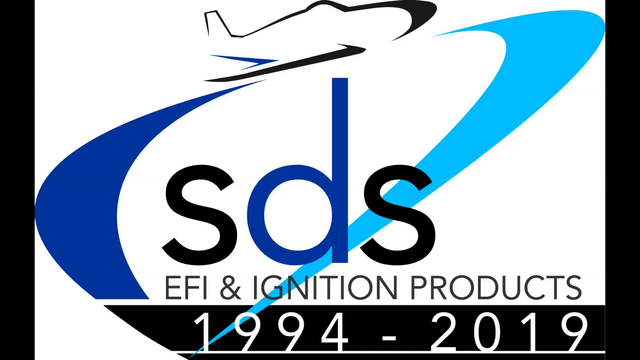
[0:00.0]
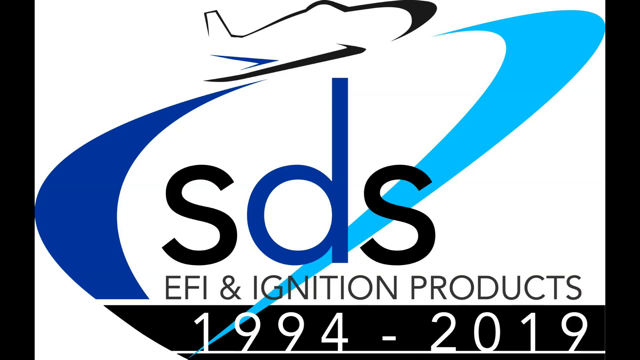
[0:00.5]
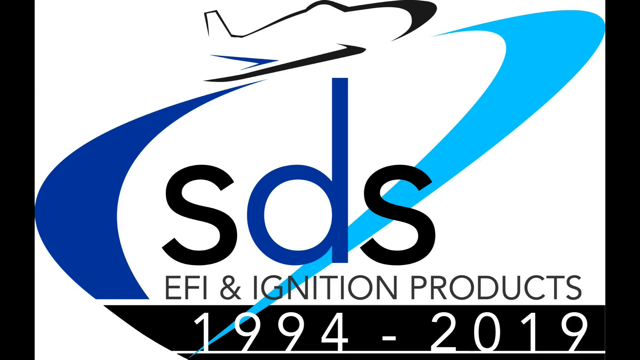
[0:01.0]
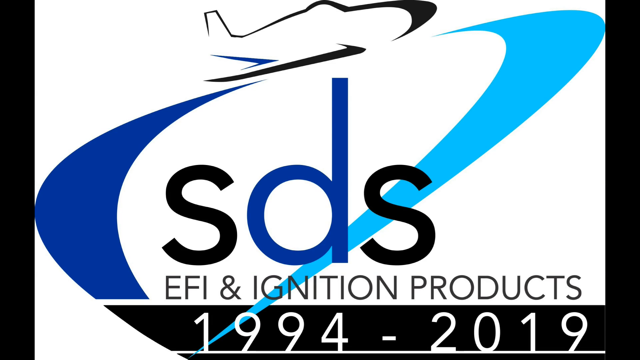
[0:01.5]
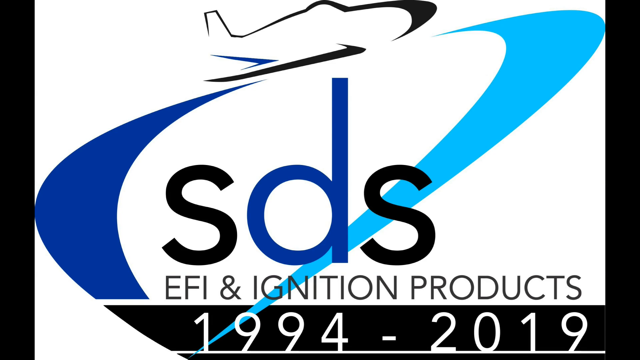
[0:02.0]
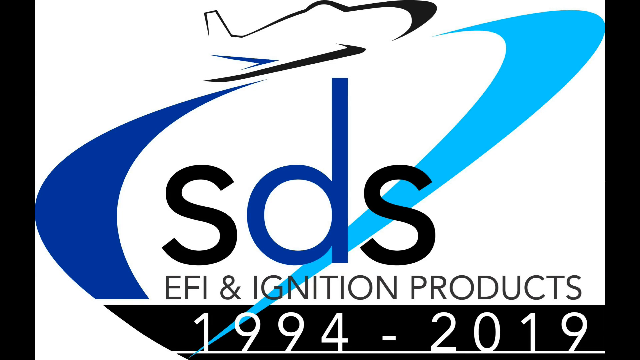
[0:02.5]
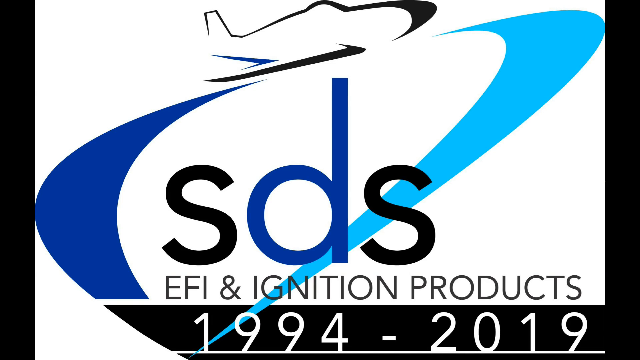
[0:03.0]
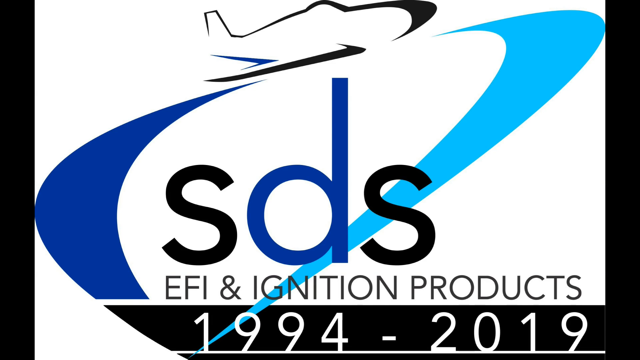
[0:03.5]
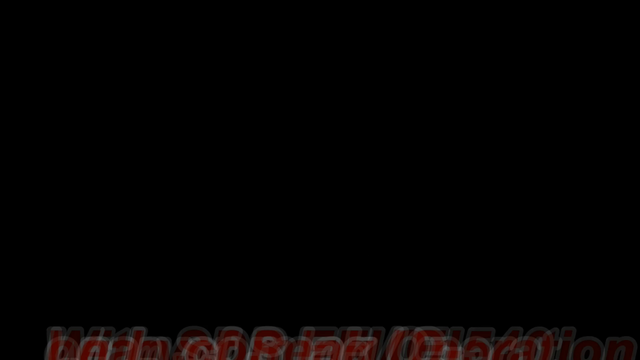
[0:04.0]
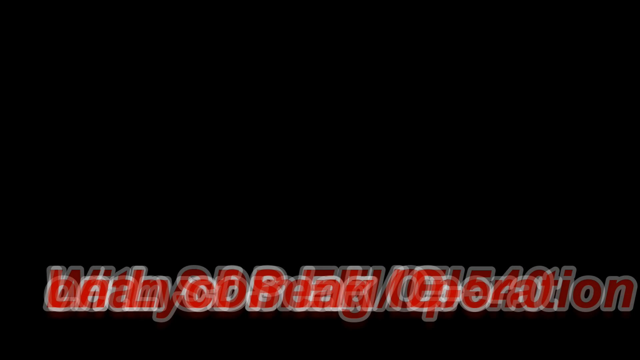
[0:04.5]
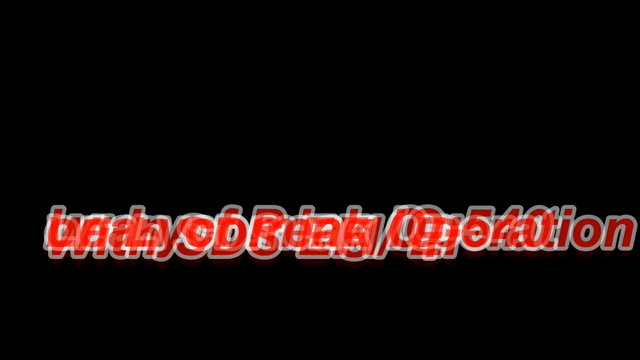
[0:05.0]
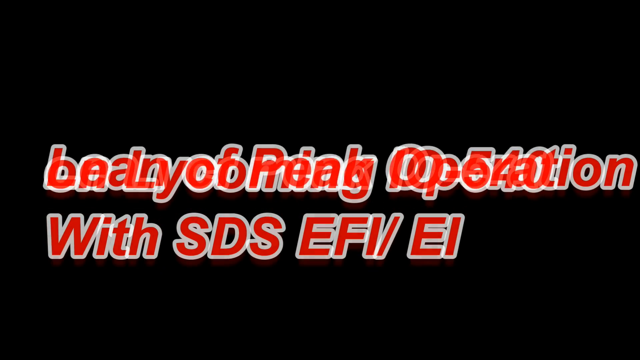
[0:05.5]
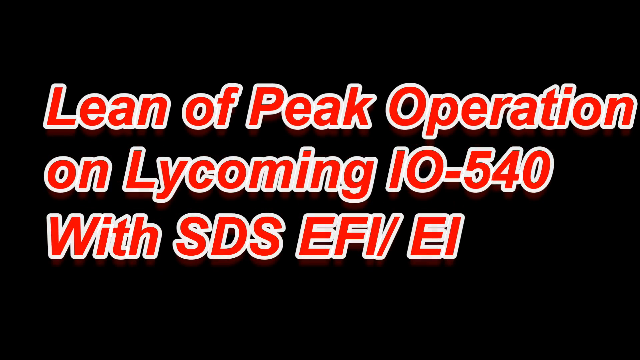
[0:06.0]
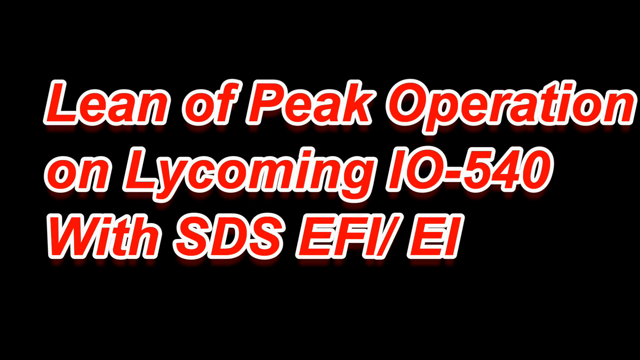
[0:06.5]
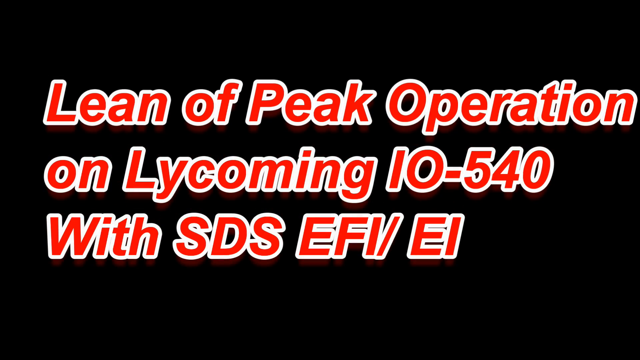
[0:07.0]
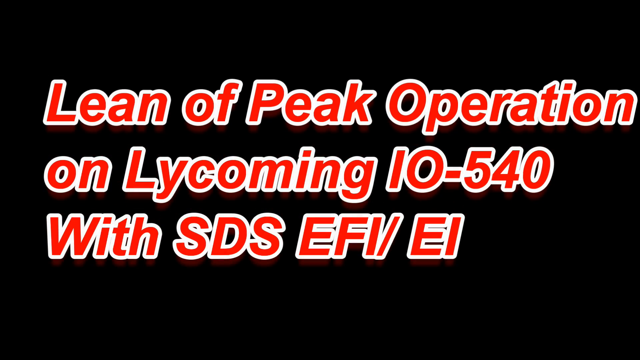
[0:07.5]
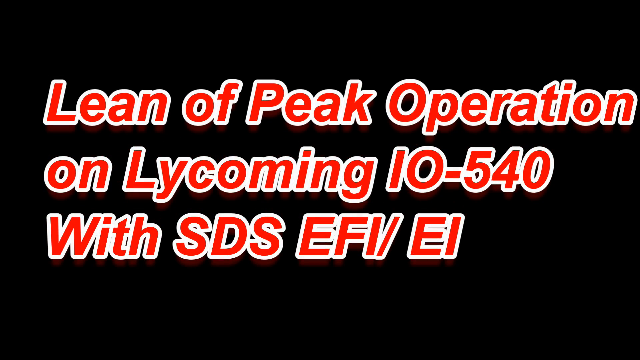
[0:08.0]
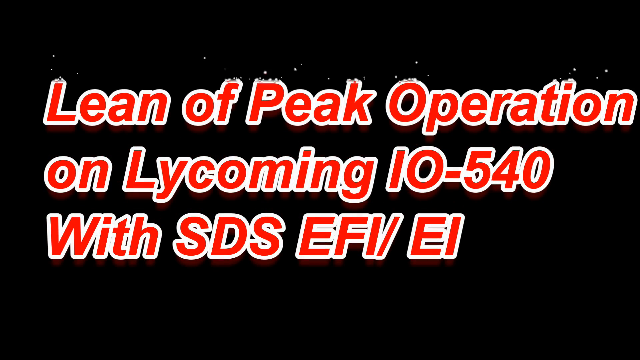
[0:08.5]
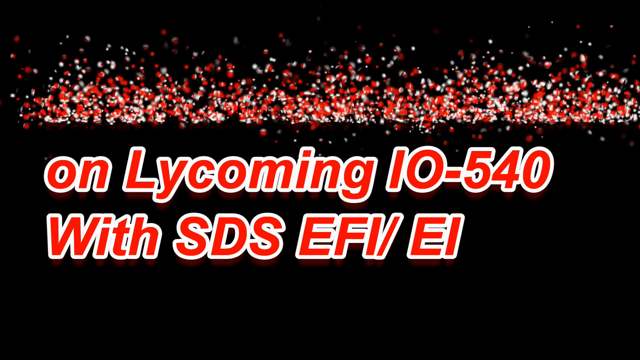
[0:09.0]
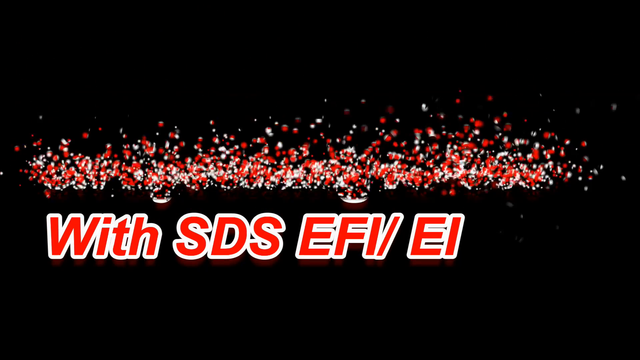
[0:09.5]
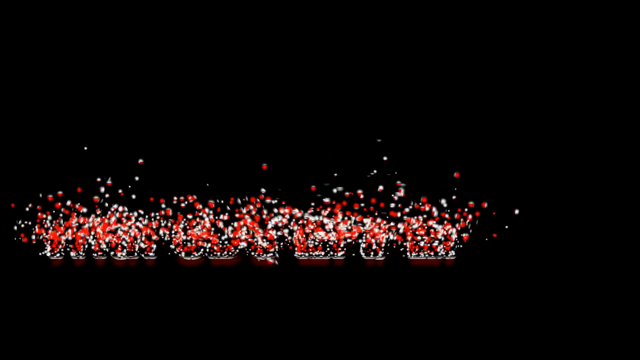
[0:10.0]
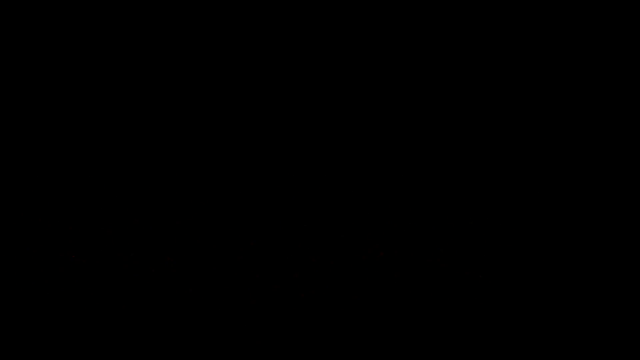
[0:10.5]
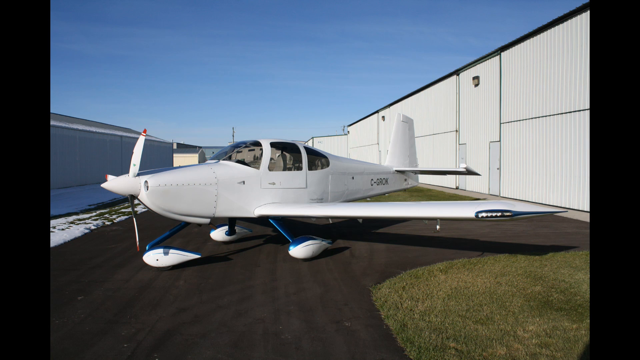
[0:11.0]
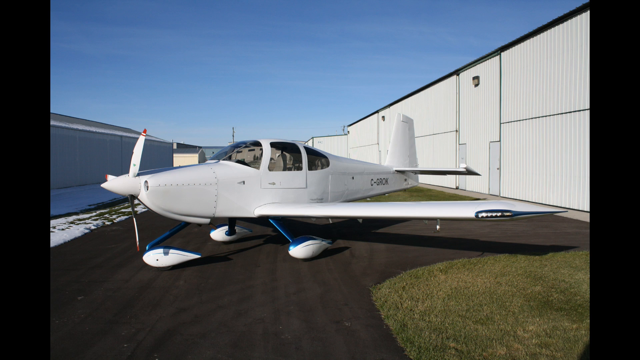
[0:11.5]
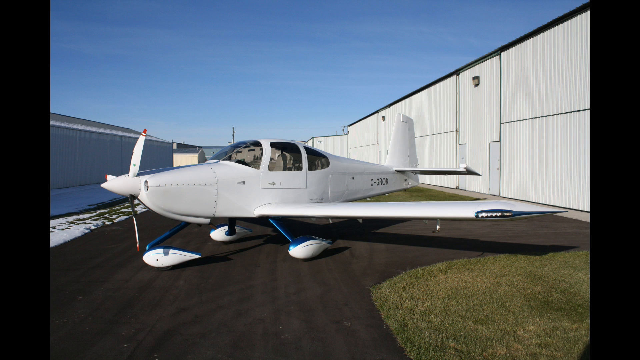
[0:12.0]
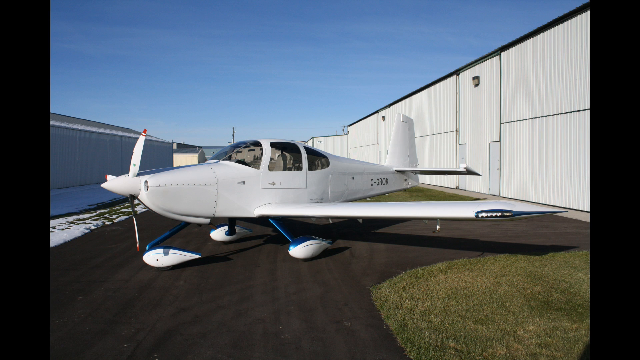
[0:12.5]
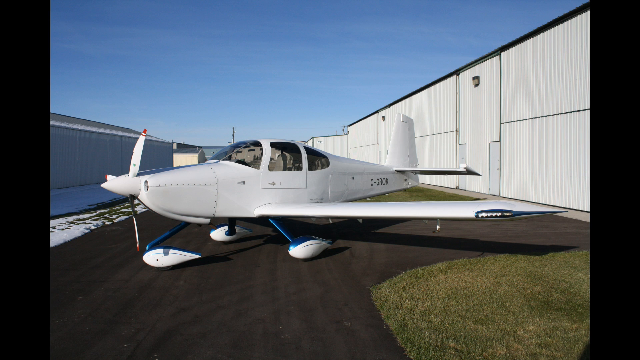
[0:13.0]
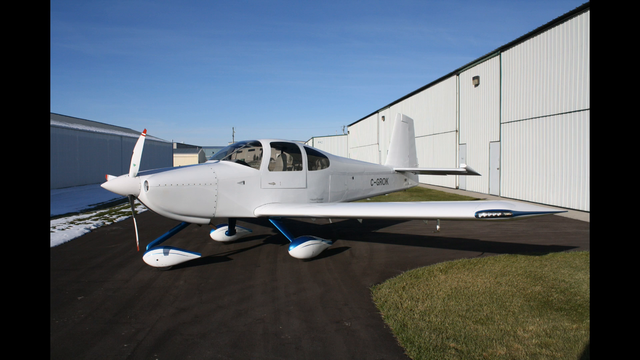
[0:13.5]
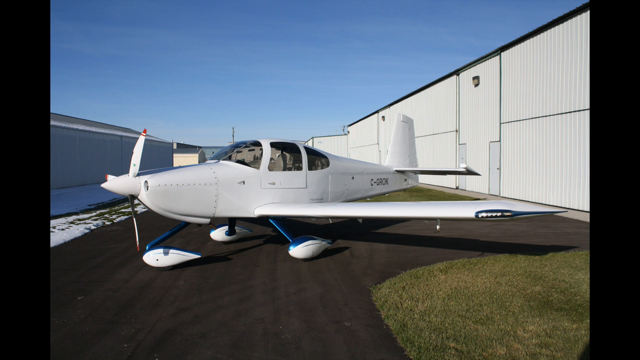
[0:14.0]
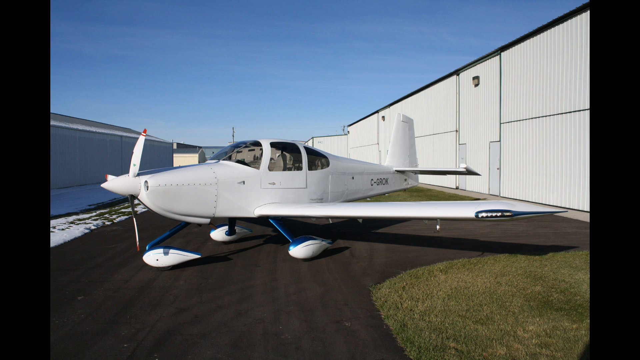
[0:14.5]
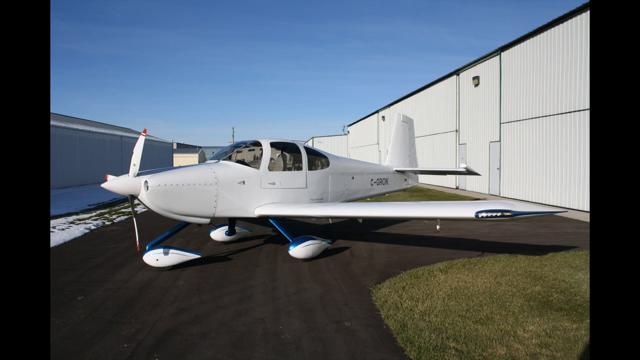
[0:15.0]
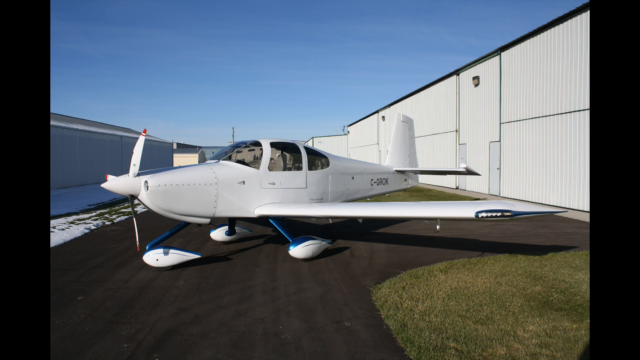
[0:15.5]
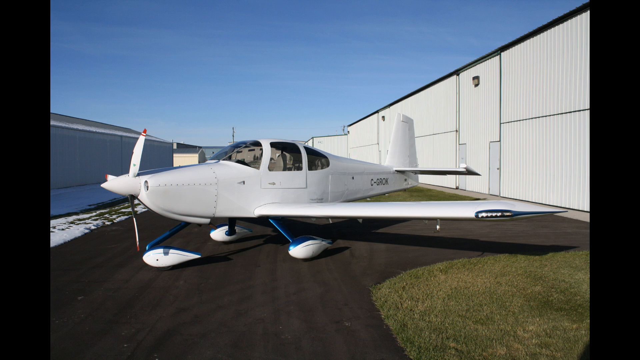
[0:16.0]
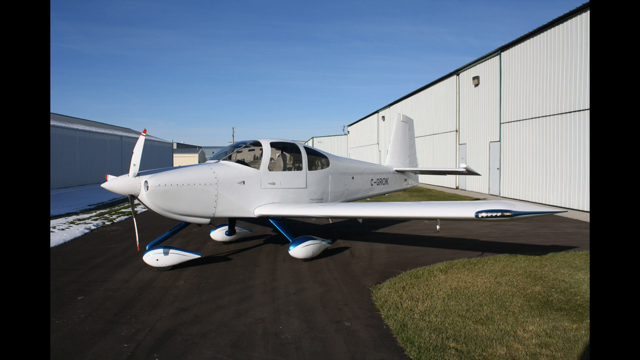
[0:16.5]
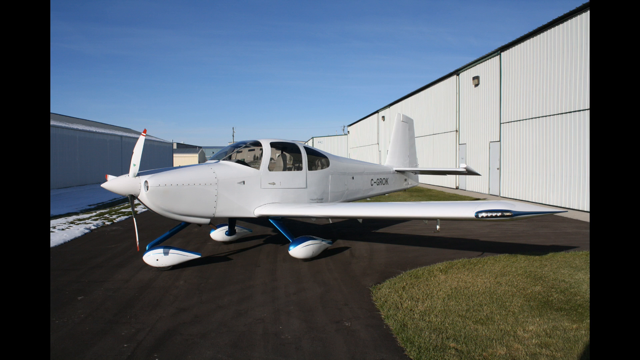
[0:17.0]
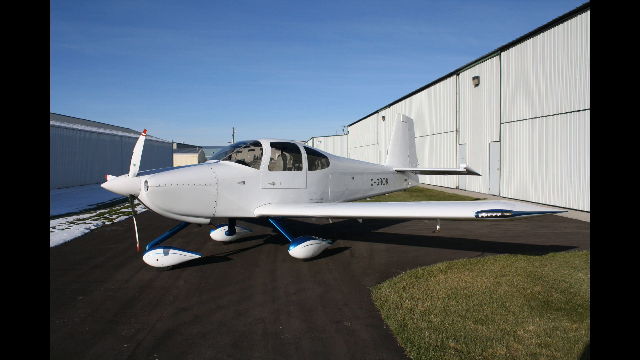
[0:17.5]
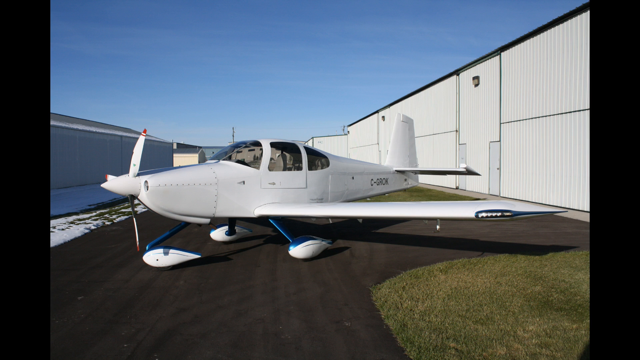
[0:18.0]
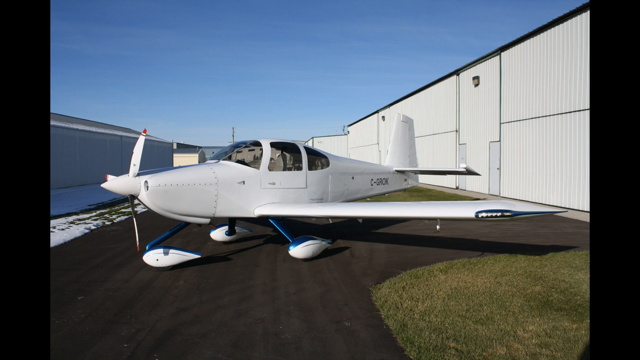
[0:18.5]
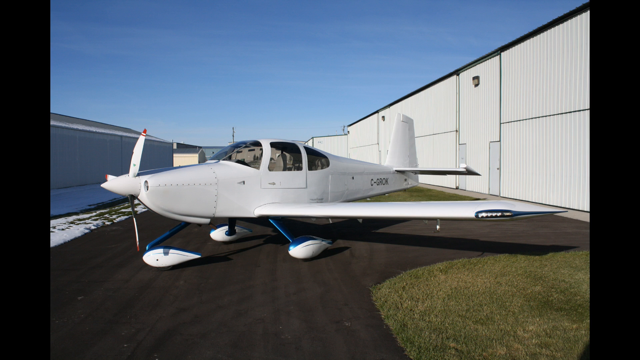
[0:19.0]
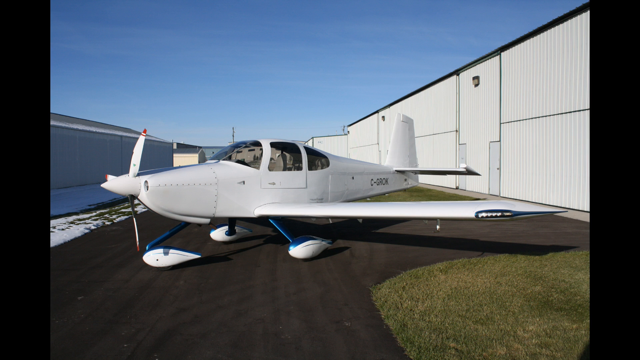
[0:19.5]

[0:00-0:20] A white background shows a blue, dark blue, and light blue line, along with black and blue text that says "SDS, EFI, and ignition products, 1994 to 2019." A black background follows with bold red text with a white outline, beginning "lean of peak operation on" and ending "with SDS EFI/EI." The text kind of gradually disappears into little black dots, and the scene changes to a parked airplane. Buildings surround it, there is snow on the ground and grass, and the sky is sunny and blue. The airplane bears the text "EGROK" and has a blue metallic, glossy color, with some red on its wing.